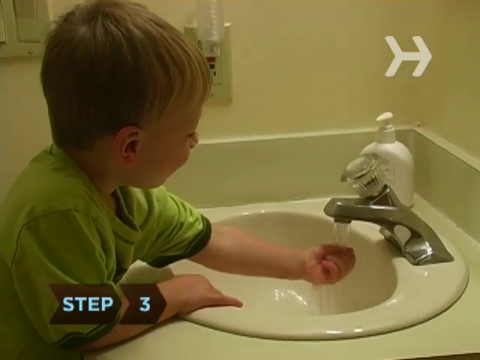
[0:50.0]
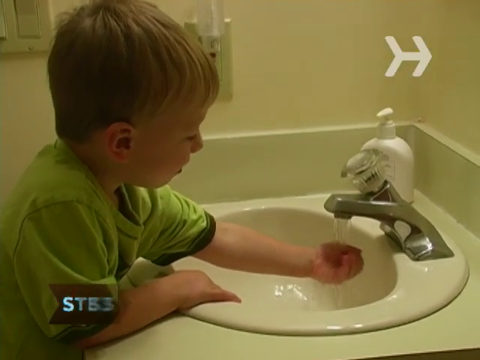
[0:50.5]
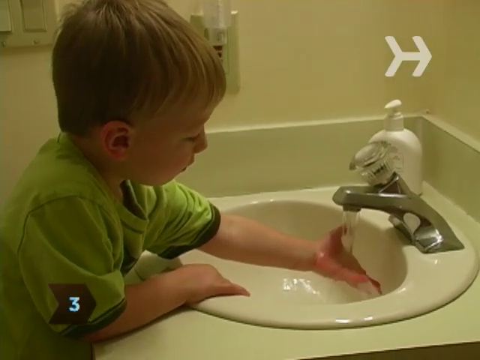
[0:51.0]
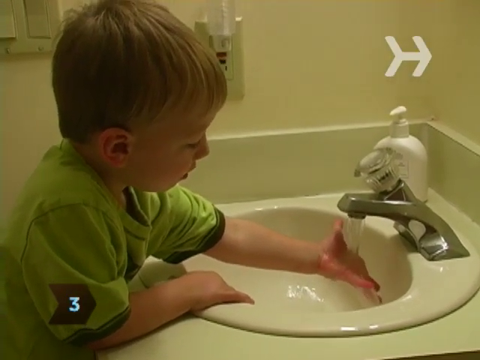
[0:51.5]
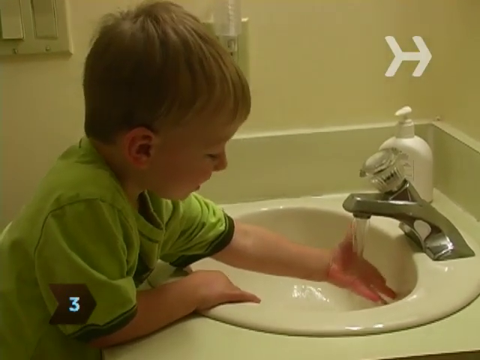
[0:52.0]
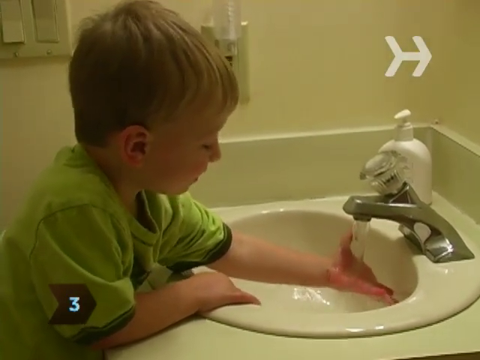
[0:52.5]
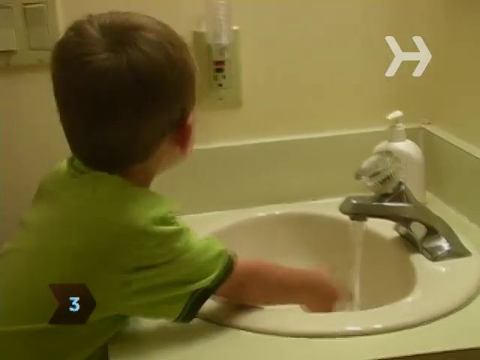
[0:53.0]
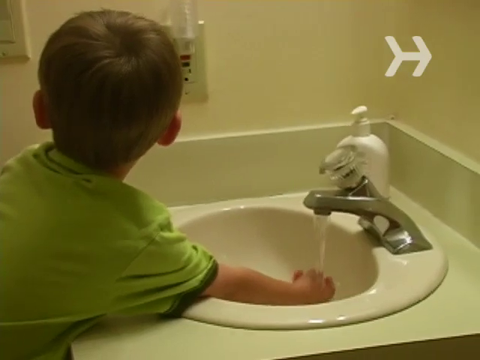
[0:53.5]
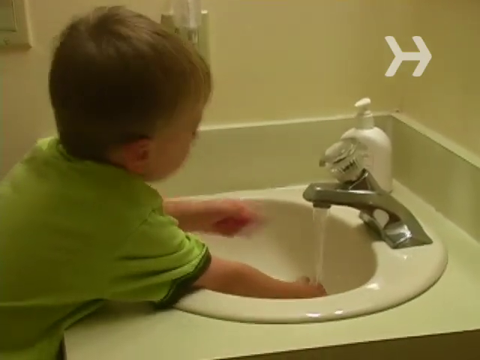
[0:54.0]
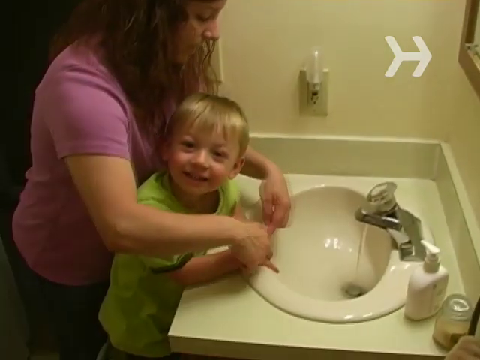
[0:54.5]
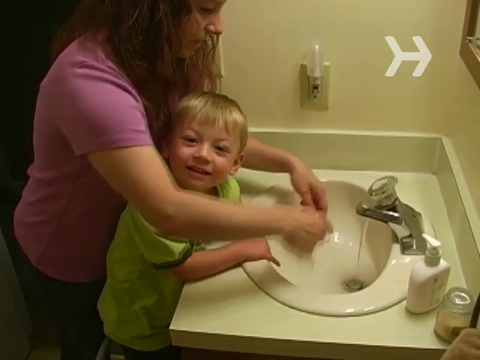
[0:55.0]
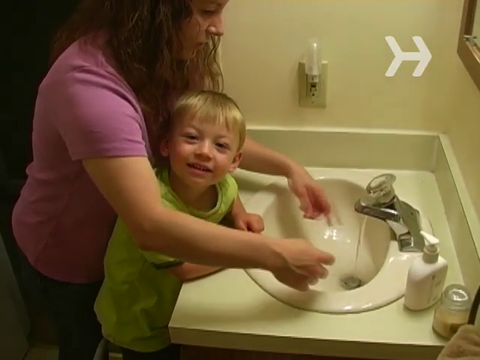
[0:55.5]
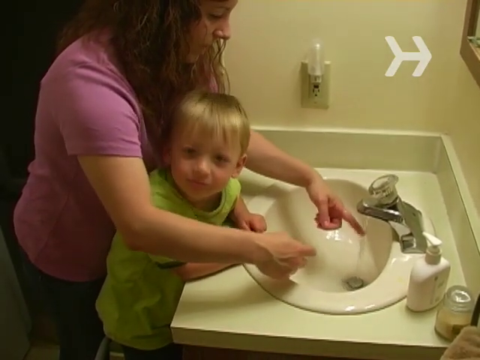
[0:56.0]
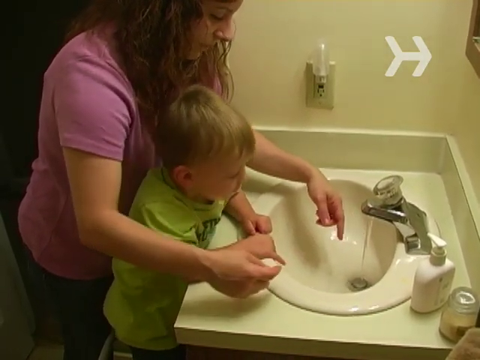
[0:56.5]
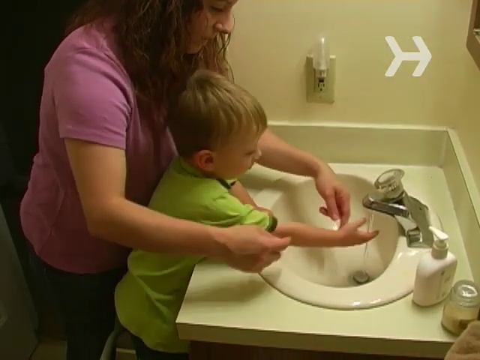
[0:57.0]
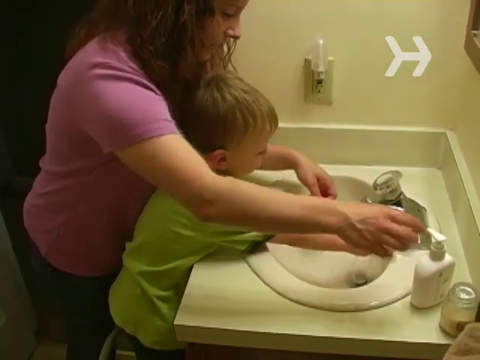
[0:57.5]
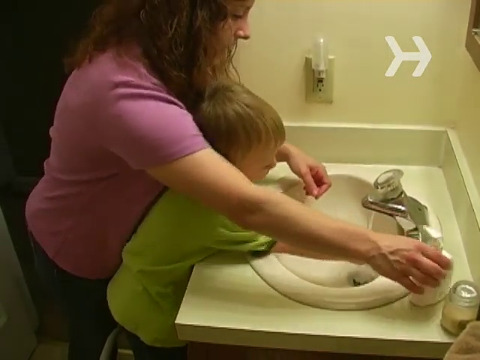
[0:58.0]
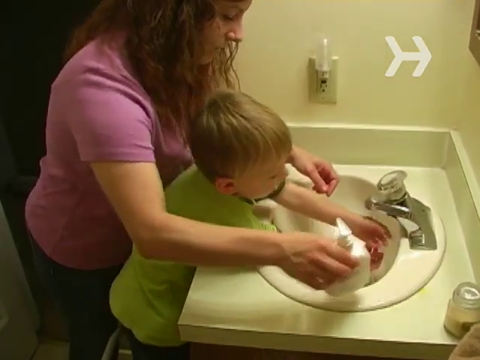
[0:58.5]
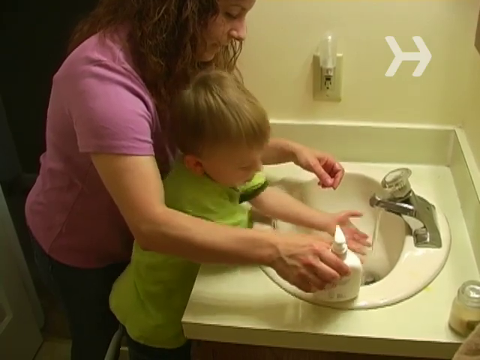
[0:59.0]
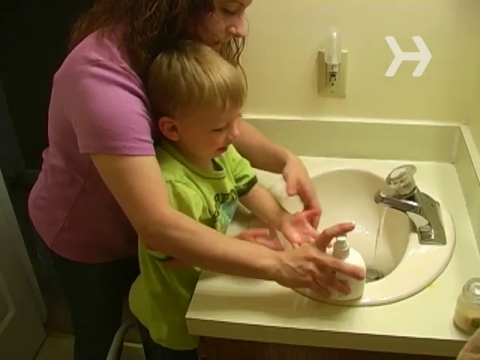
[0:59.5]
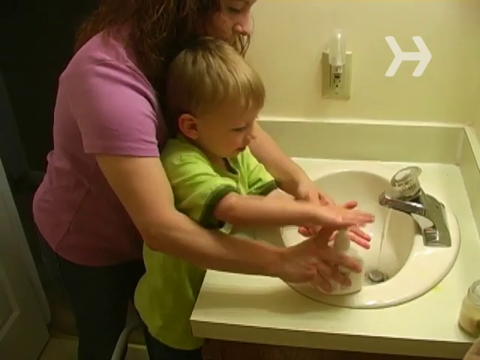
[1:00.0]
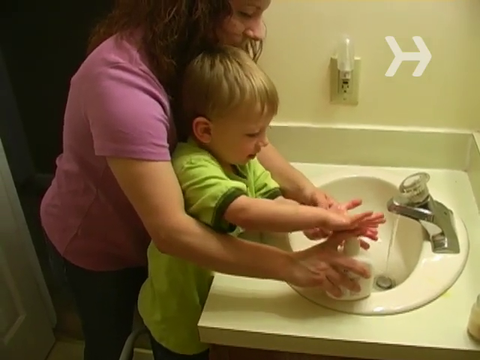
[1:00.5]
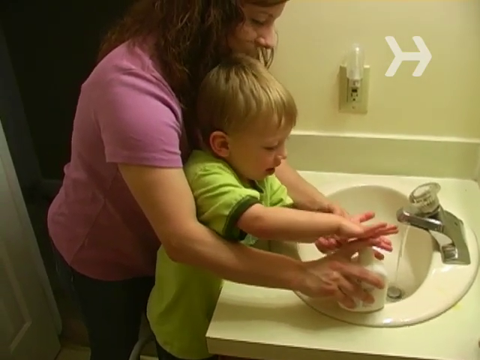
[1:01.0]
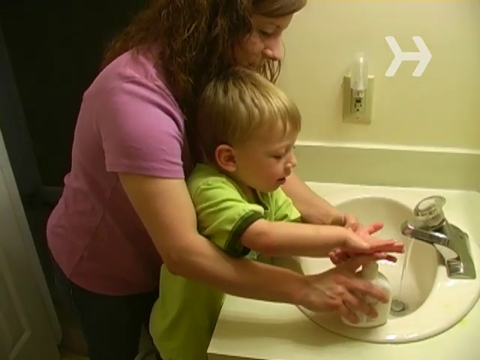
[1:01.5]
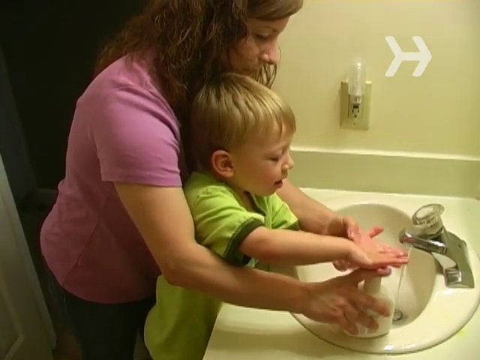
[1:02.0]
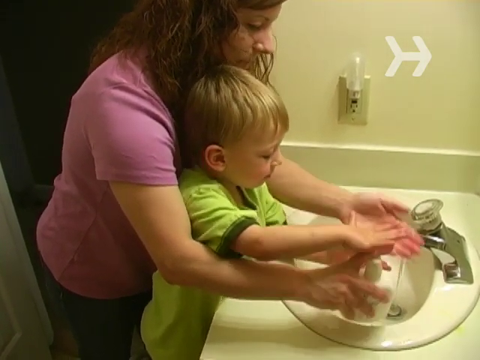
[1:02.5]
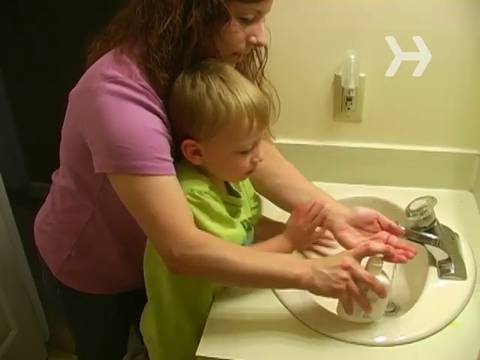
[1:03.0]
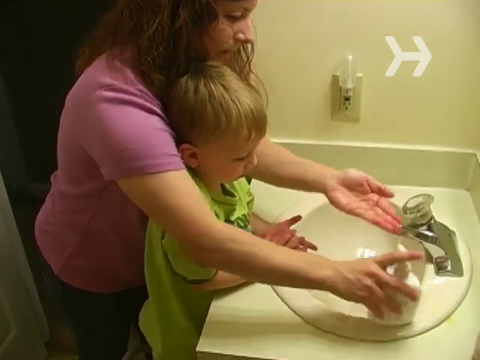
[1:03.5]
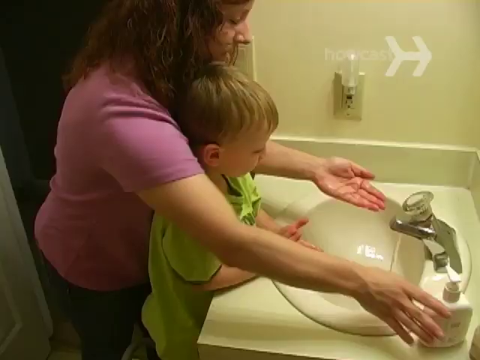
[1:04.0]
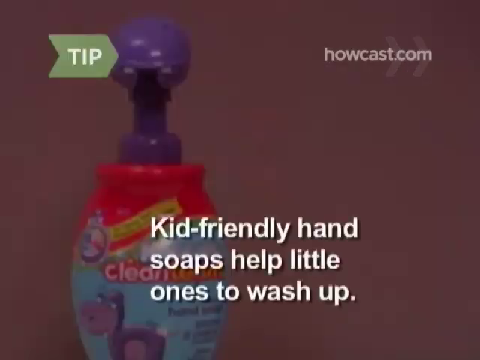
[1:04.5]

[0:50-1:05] The child puts his left hand under the water and then his right hand. His mother tries to get him to put both hands in and get more water on them, but he seems more interested in interacting with the person filming, most likely the father. She redirects him back to the task, he refocuses and wets his fingers again, and she grabs the liquid soap dispenser. She holds it on the edge of the sink and the child pumps it into his hand several times, so he has liquid soap on his palms. At the end, a product shot of the hand pump appears with text reading "Kid-friendly hand soap helps little ones to wash up."